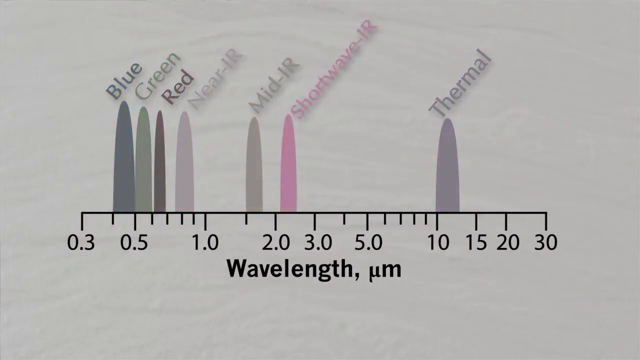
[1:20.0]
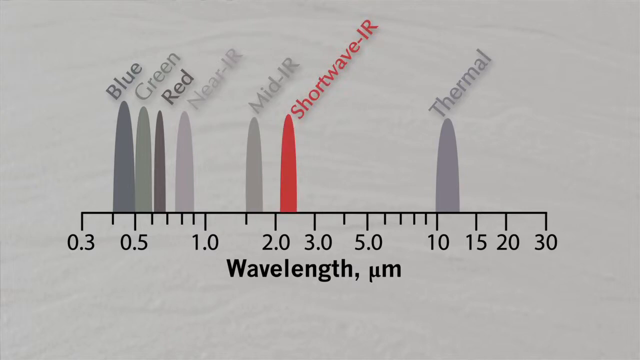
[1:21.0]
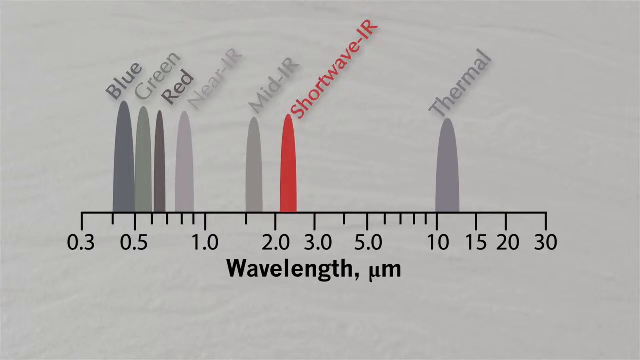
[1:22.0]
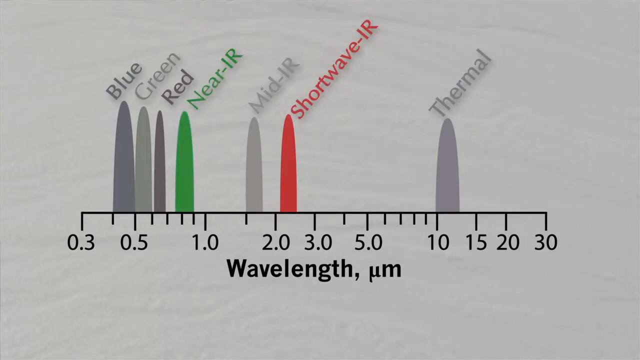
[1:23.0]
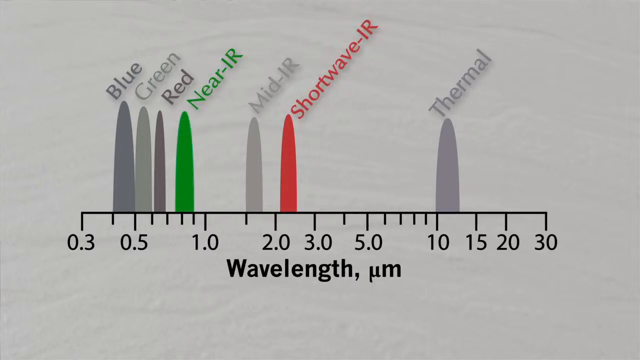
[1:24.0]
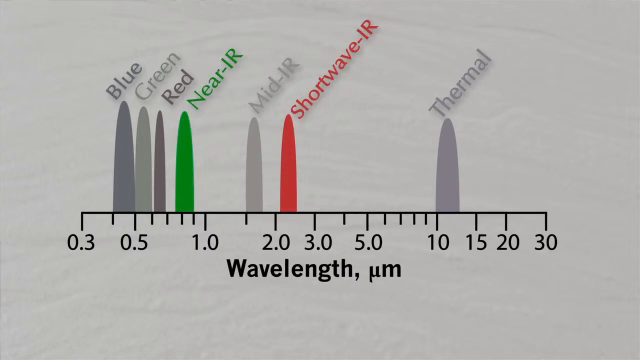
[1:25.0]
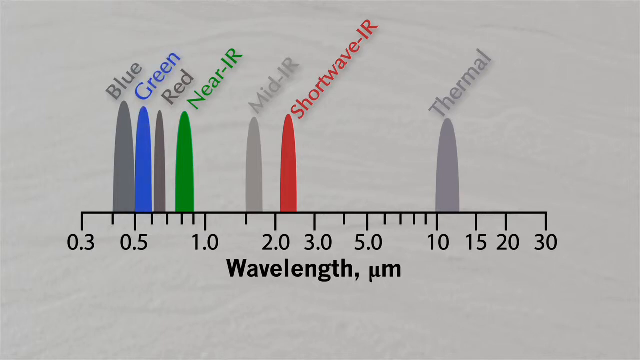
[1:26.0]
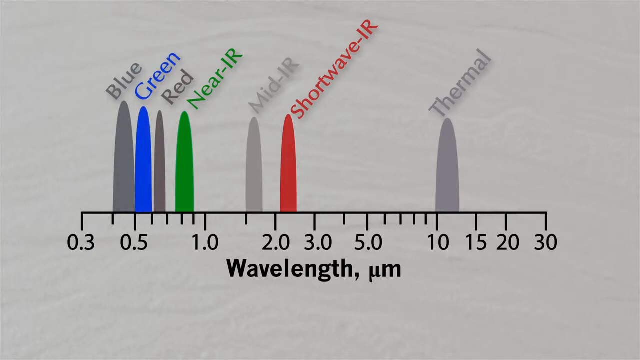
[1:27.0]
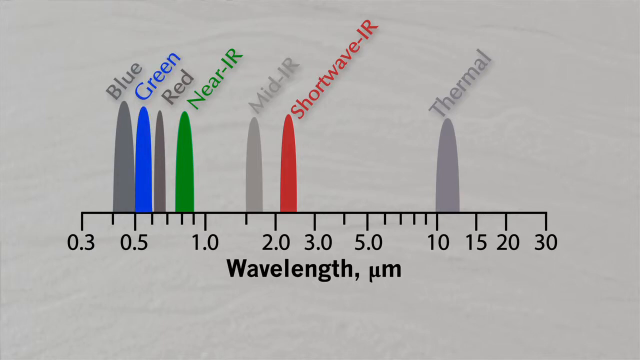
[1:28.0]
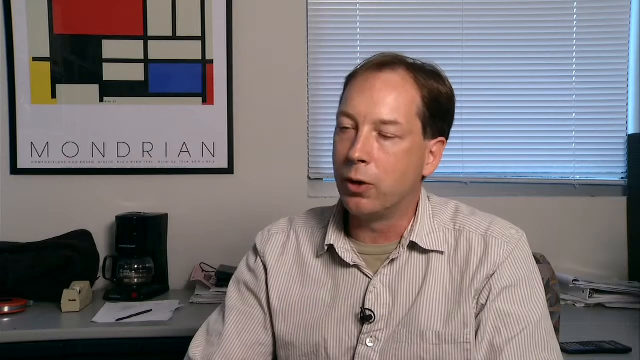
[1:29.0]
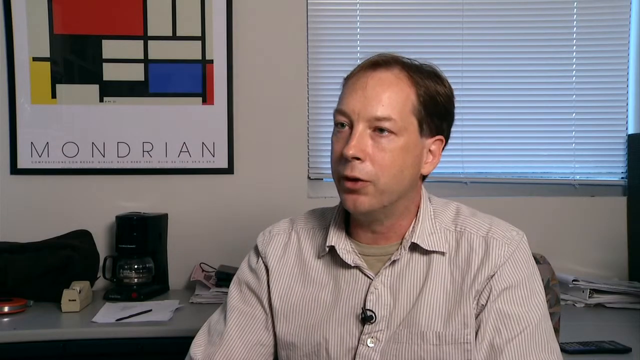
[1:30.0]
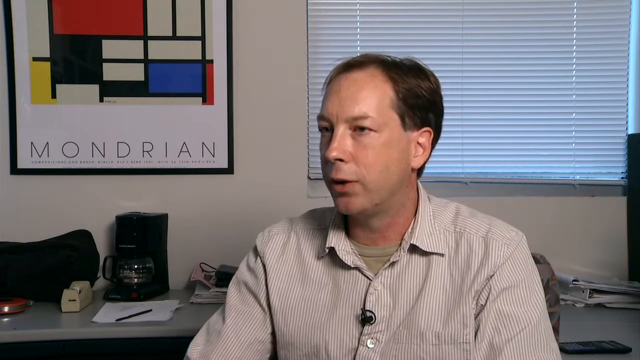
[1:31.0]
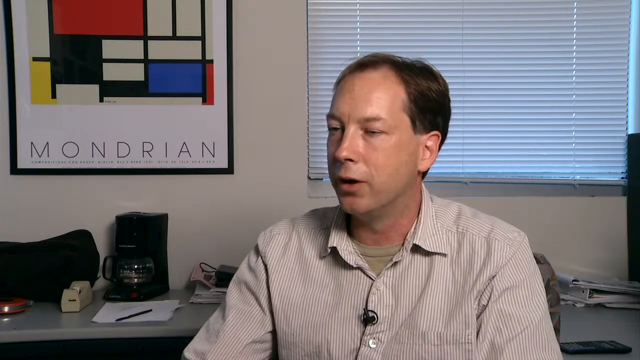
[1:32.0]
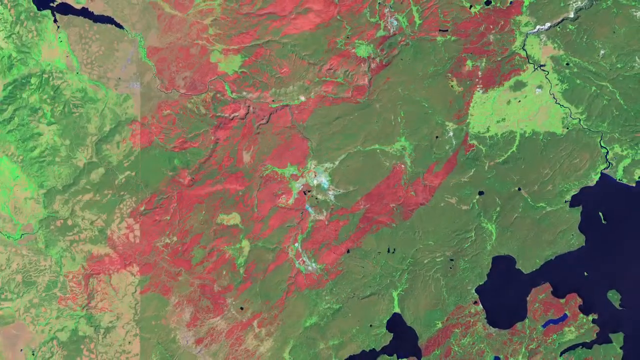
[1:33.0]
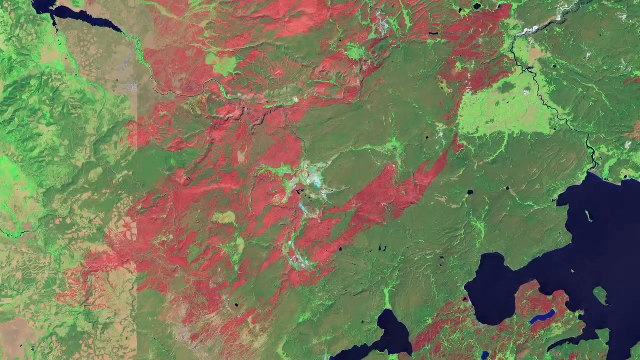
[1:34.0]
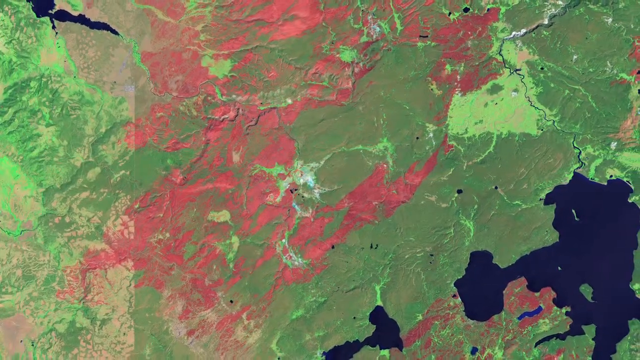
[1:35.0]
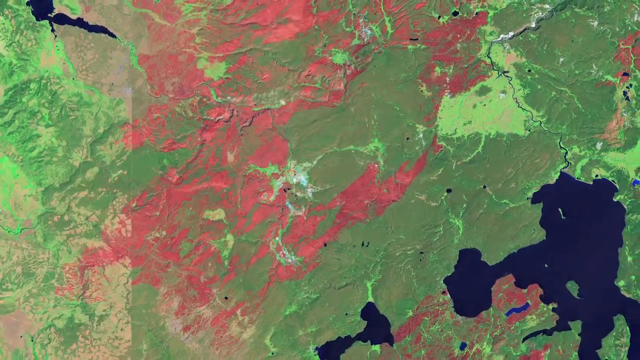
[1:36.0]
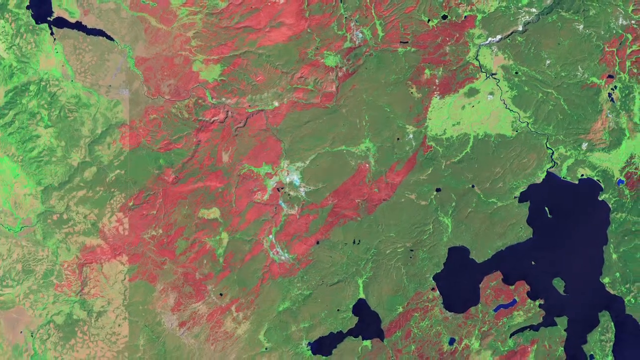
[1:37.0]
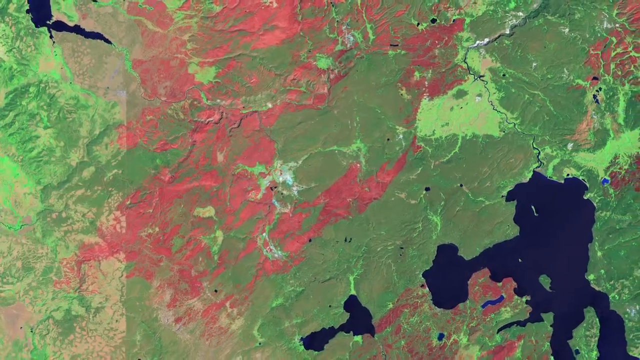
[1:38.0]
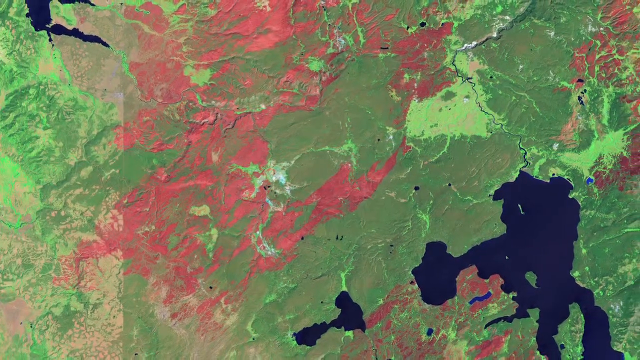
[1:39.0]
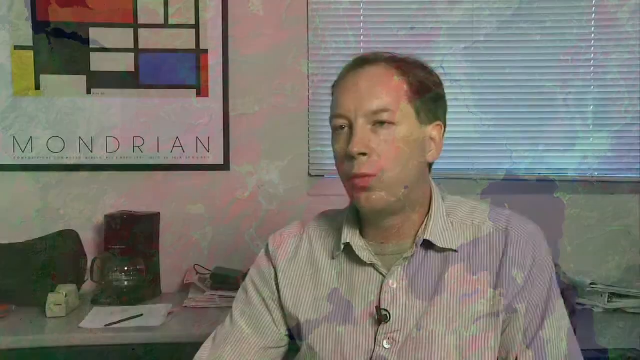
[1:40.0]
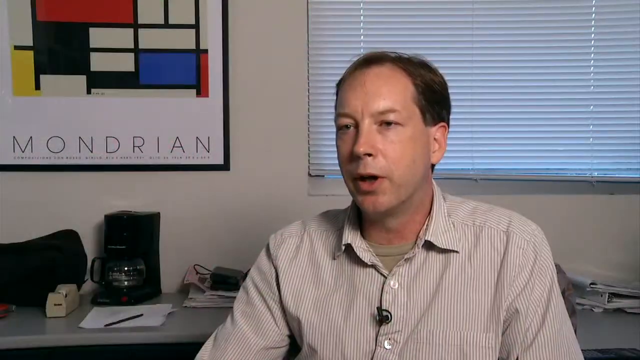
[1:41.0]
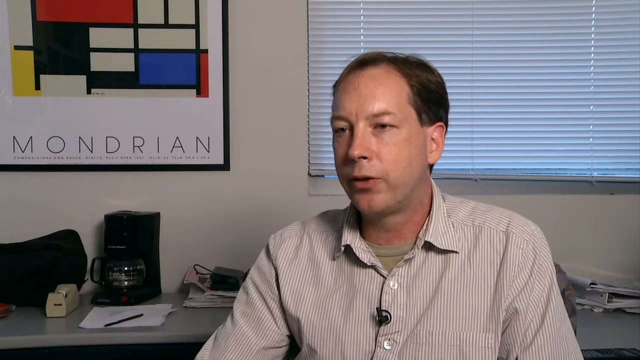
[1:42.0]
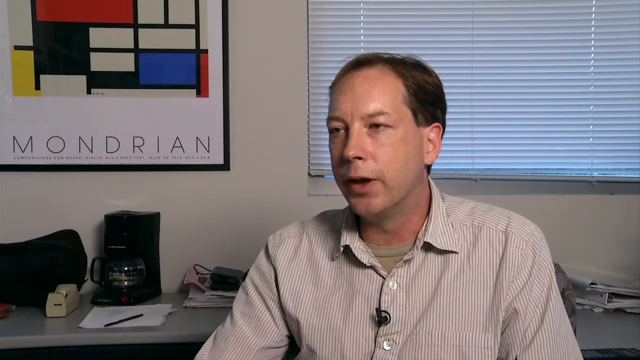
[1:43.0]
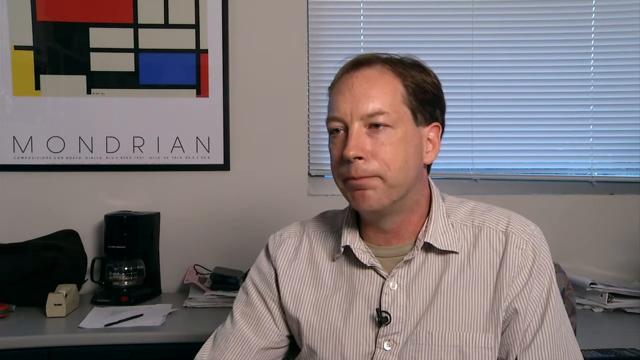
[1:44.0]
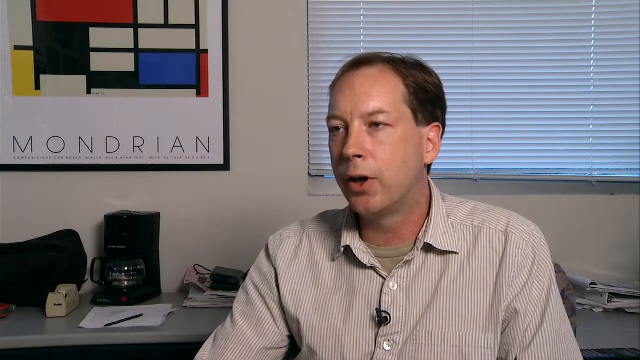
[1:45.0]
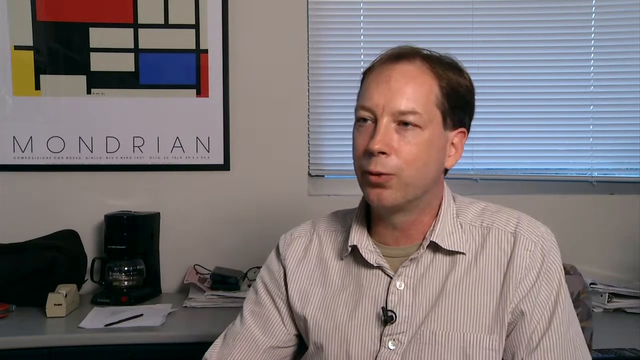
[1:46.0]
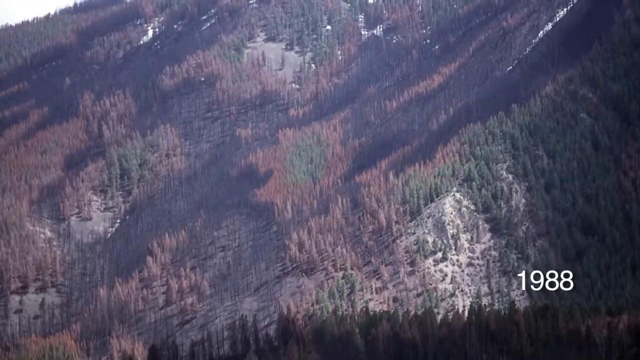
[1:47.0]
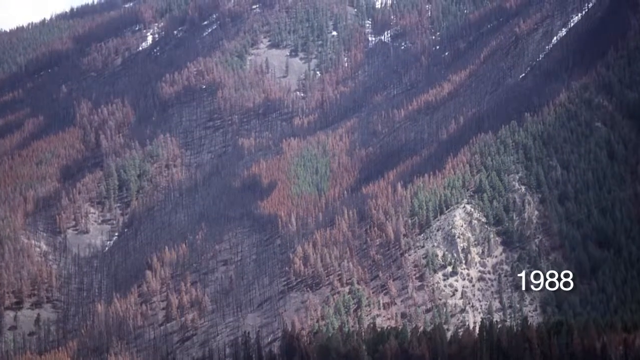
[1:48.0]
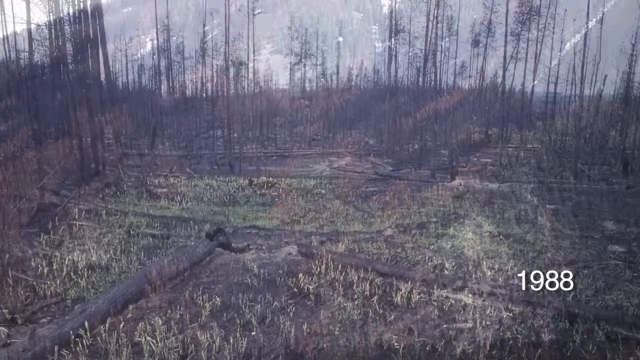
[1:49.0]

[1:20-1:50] A wavelength chart runs from the left side to the right side, starting at 0.3 with the numbers increasing to the right up to 30. Different colors on the chart represent blue, green, red, near-infrared, mid-infrared, shortwave infrared, and thermal. Under the chart is "wavelength,", and as the video progresses the colors on the chart change: the shortwave infrared becomes more red, the near-infrared becomes more green, the green becomes blue, and the colors fill in. The scene changes to a man in an office with a window behind him and a picture behind him that says "Mondrian". Under the picture is a table with a coffee maker, a coffee pot, a piece of paper, a pen, a tape dispenser, and some books piled on top of each other. The man is white and looks probably in his 40s. He wears a striped dress shirt and an undershirt that looks green. He talks to the camera for a while, moving his hands a little. The scene shifts to an overhead view of a map, apparently of Yosemite Park, shown in different colors, and the camera pans out as the video progresses. It shifts back to the man in the office, who continues to talk and answer questions. Then there is an overhead helicopter drone view of the forest after it has been burned, followed by a very close first-person view of the barren, burned forest.